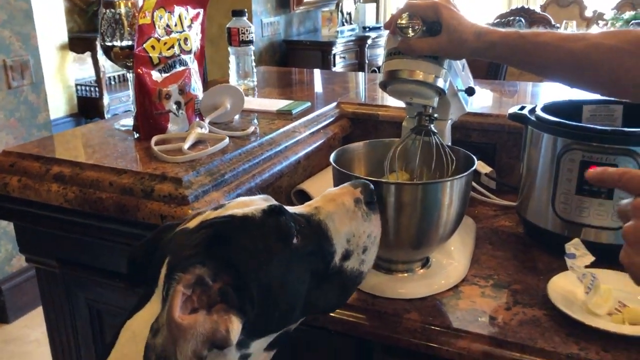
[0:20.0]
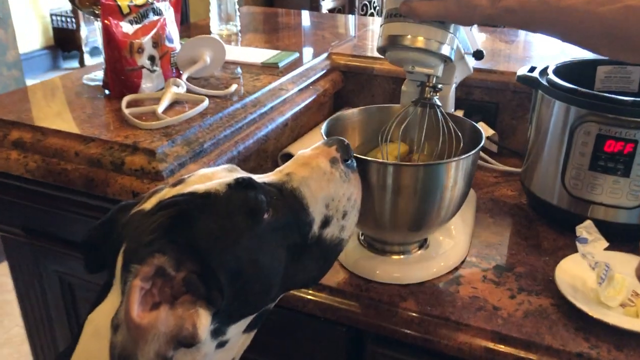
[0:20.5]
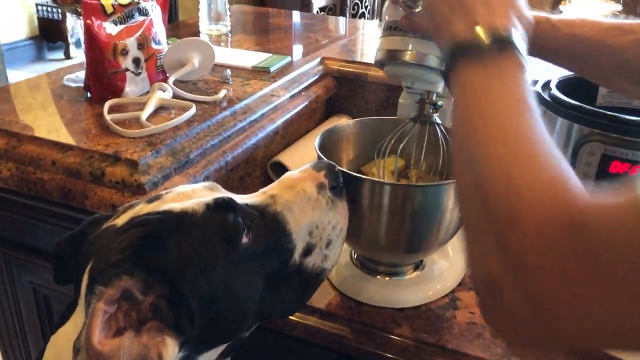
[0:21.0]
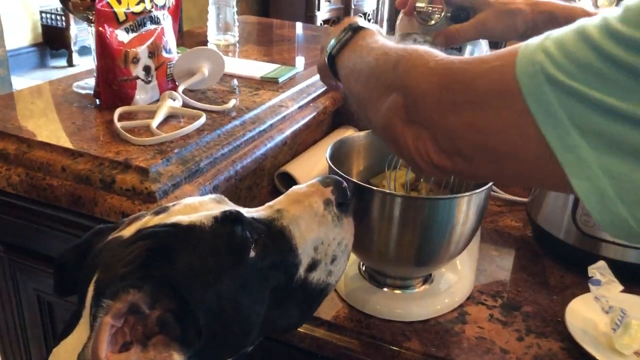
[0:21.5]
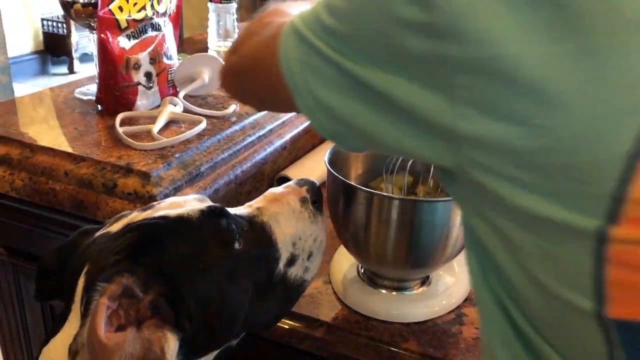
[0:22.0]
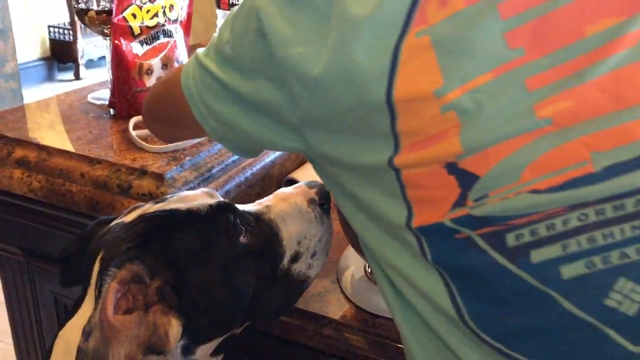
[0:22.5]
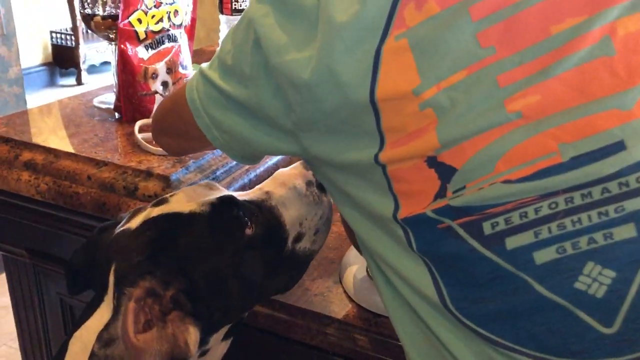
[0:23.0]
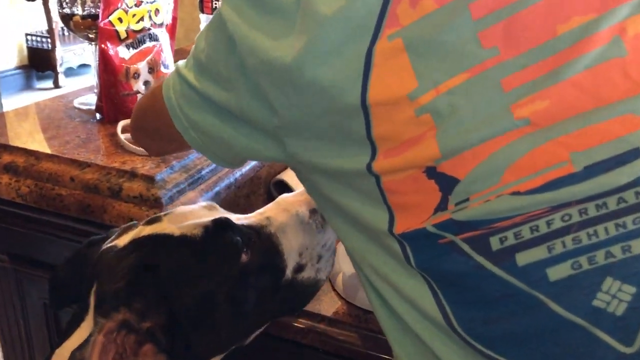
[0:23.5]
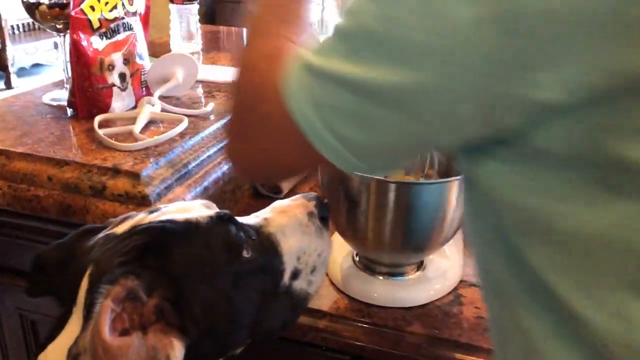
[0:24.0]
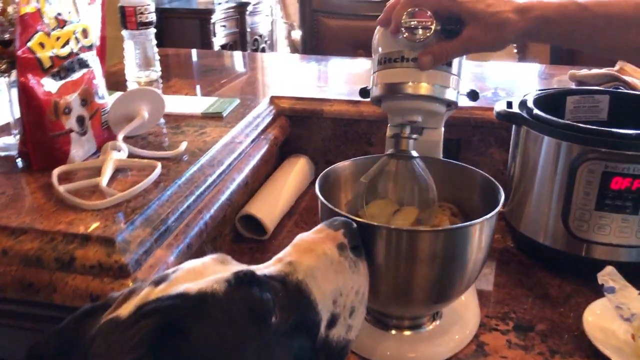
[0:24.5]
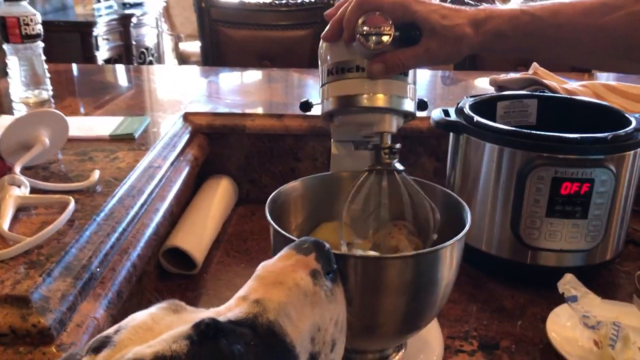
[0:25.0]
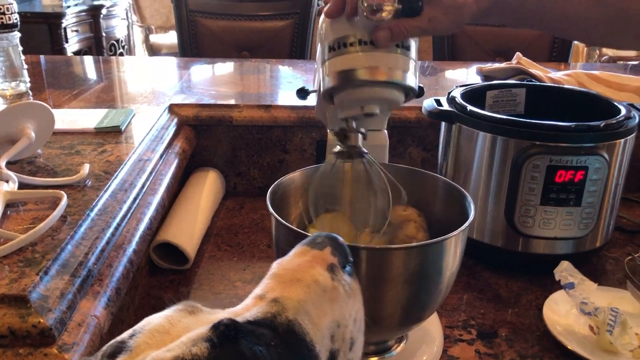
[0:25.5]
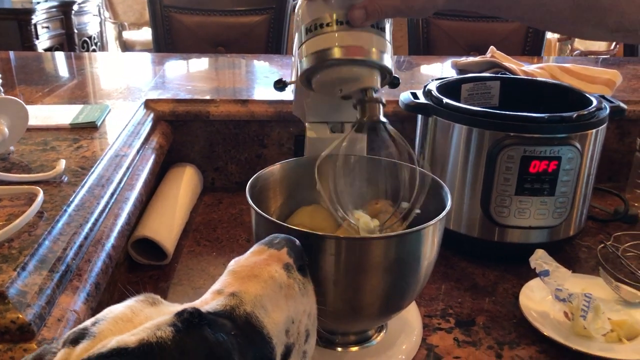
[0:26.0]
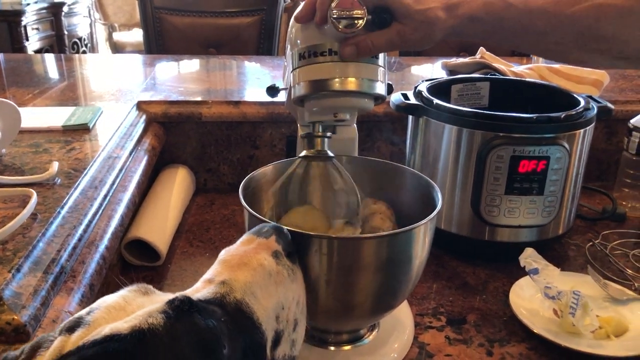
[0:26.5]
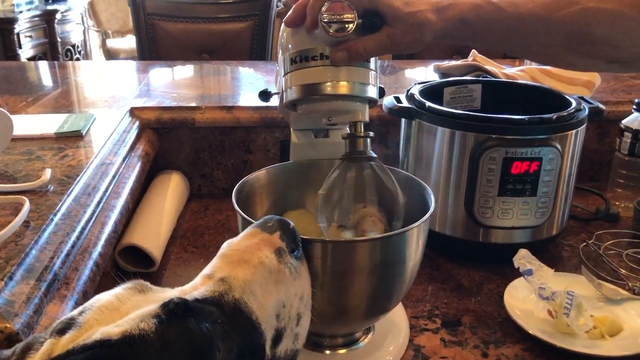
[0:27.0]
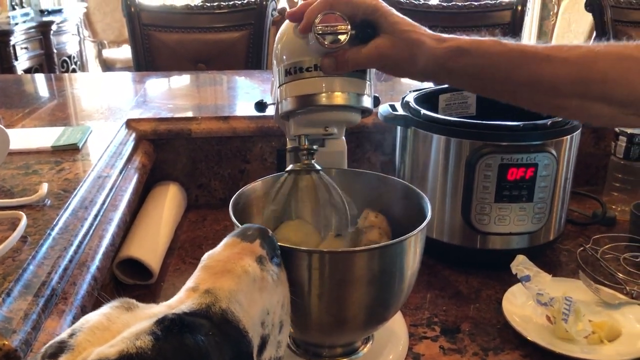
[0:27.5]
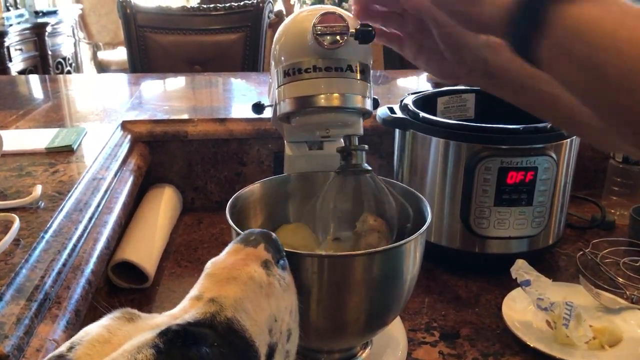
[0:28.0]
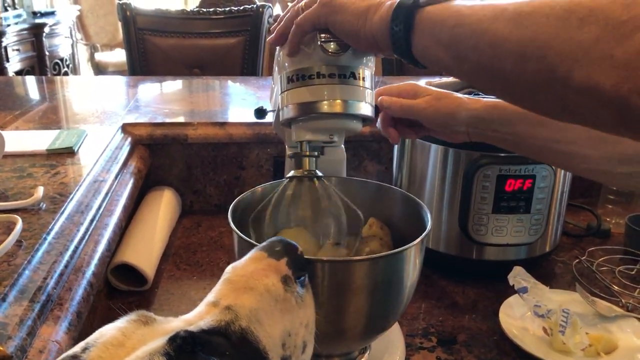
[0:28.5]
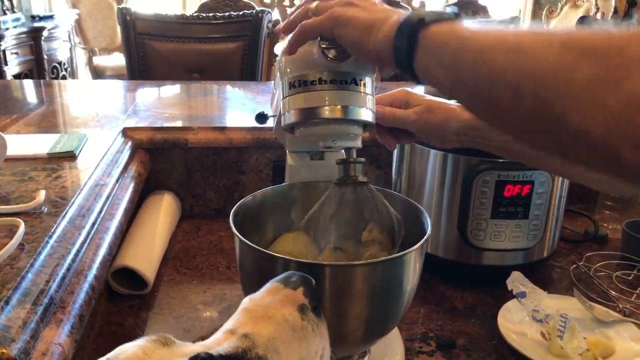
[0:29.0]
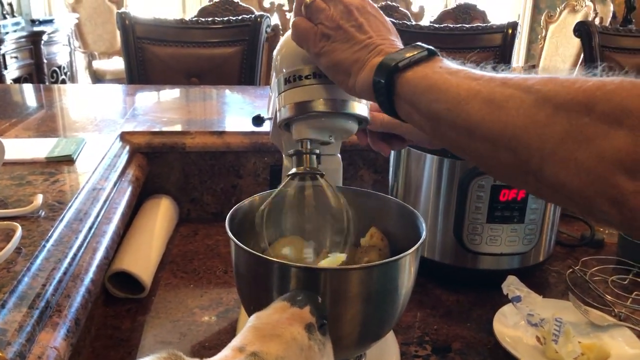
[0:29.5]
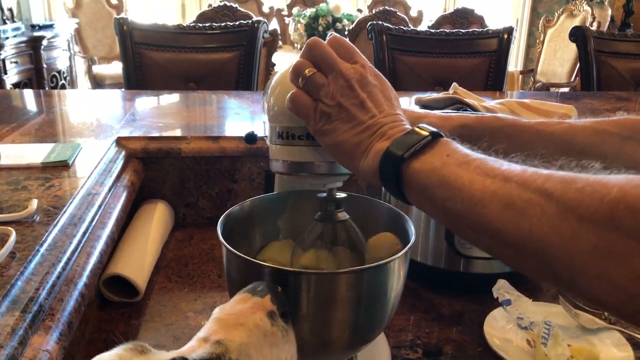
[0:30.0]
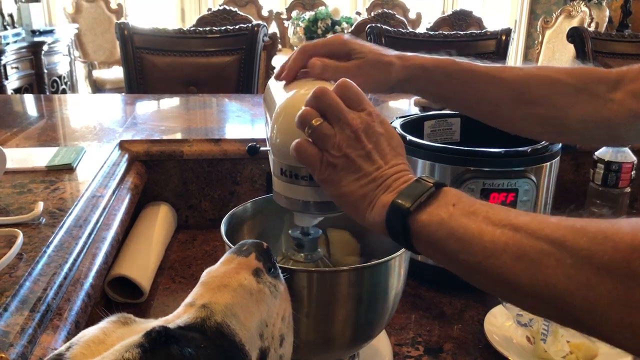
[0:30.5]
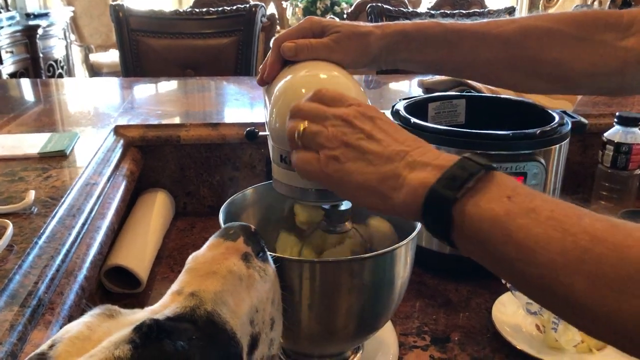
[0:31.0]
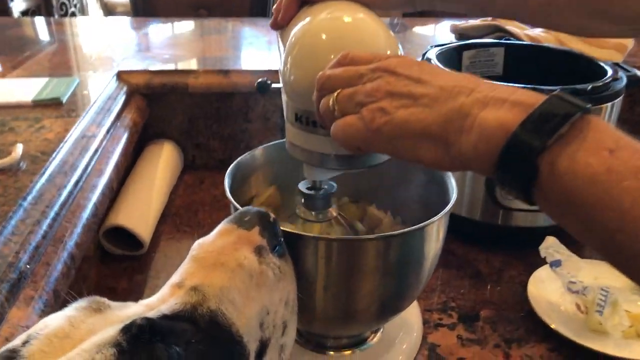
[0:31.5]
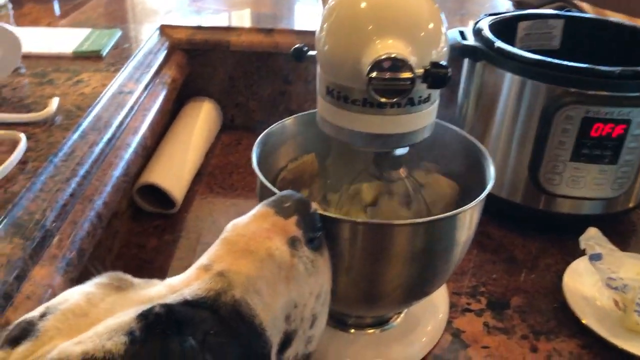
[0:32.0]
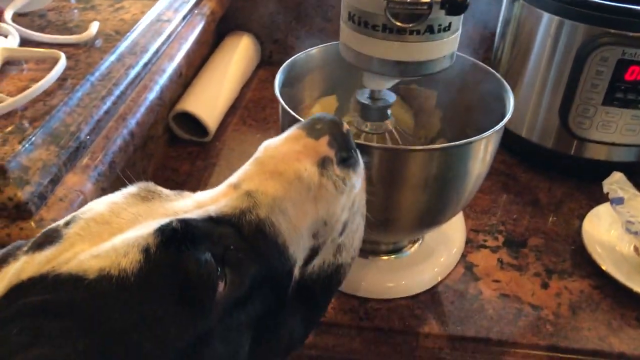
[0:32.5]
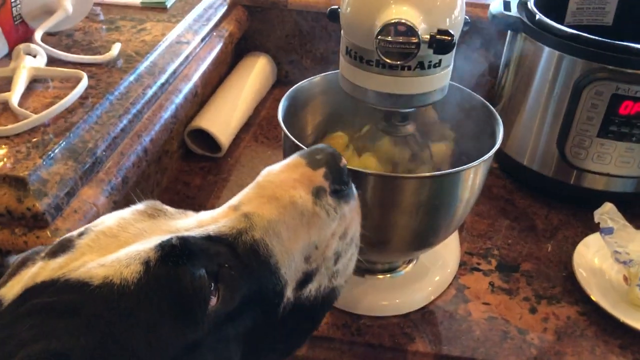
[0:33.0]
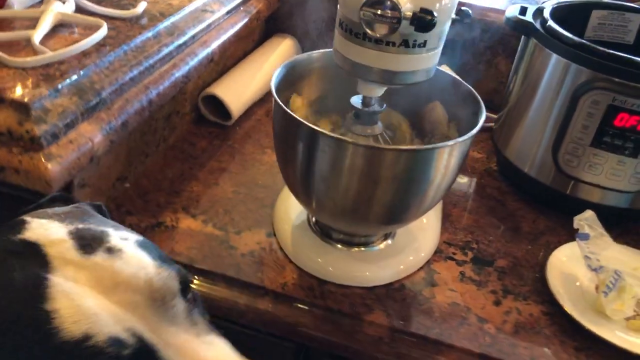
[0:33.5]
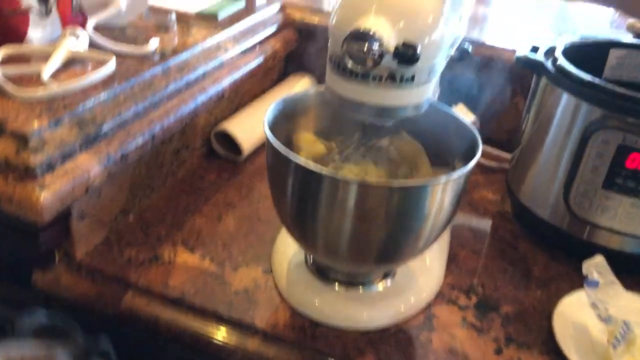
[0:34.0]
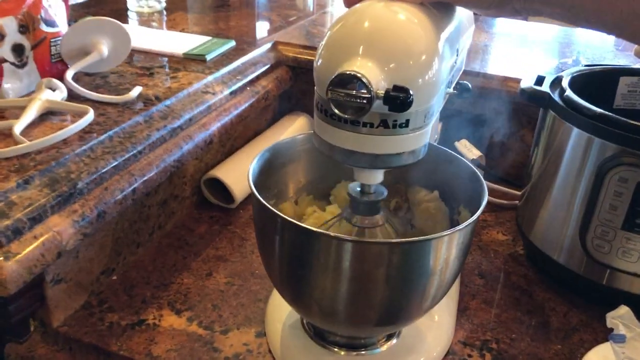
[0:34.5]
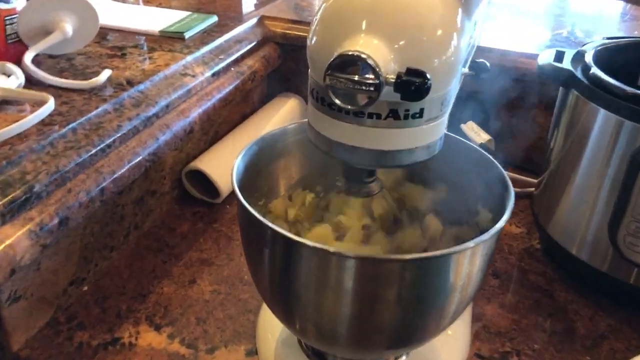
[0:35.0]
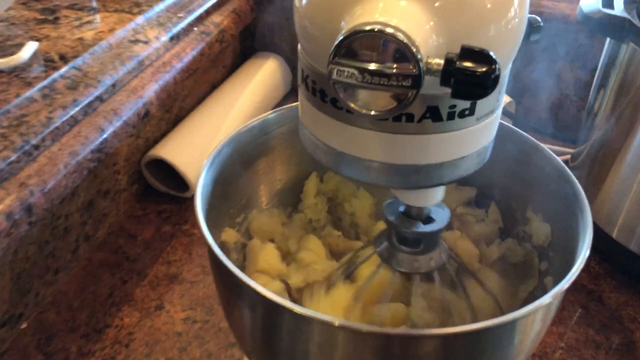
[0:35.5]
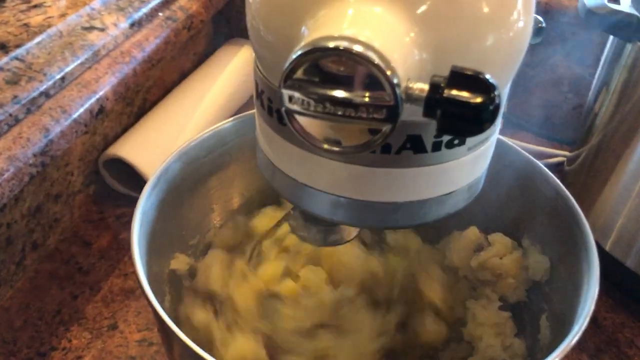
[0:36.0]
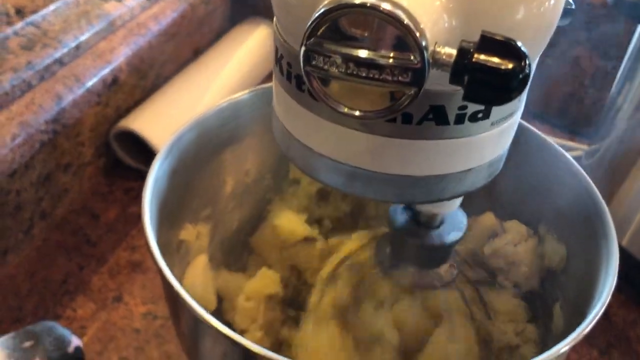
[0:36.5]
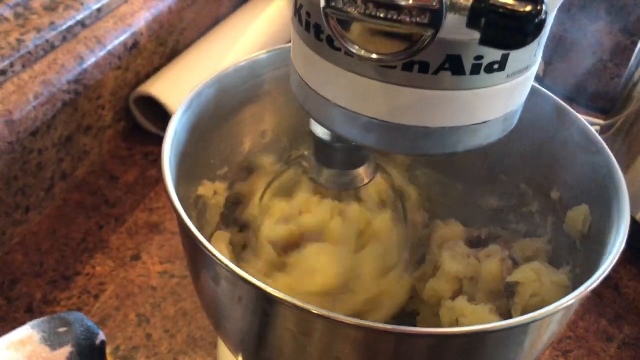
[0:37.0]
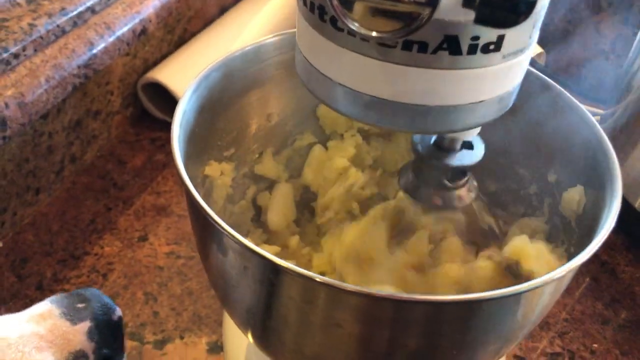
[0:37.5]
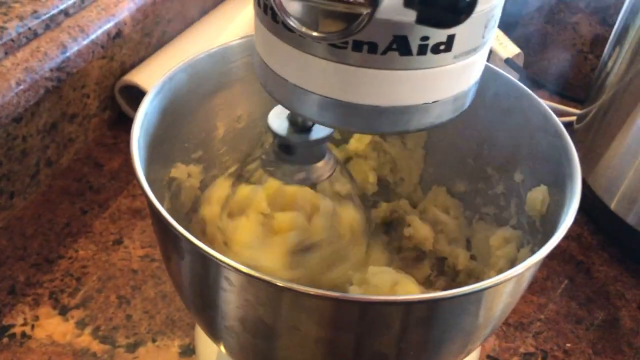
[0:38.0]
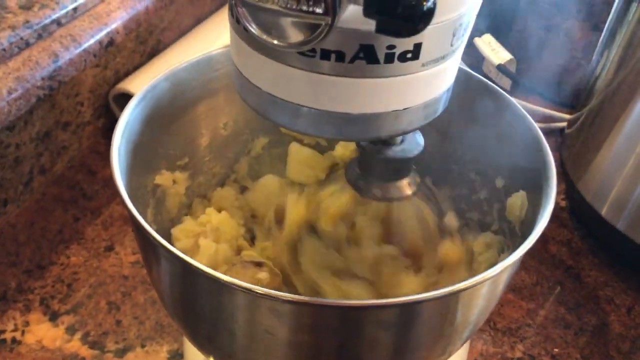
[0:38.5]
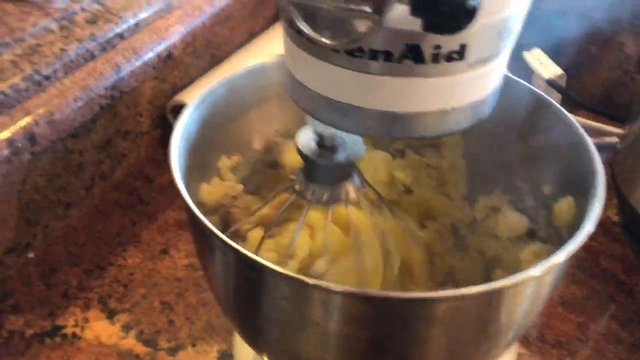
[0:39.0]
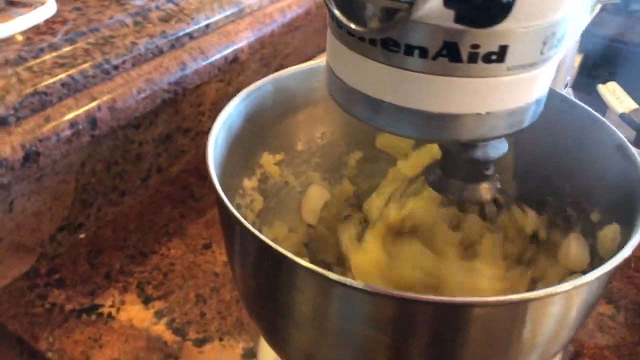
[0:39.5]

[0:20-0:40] In the same kitchen, the Caucasian person actively operates the electrical whisk, whisking the unpeeled potatoes. The potatoes seem to be steaming hot, as steam rises from the stainless steel bowl they are in. To the left of the electrical whisk there appears to be a plastic whisk. Behind the dog food there looks like a wine glass, and the dog food appears to be labeled "Paw Pero". The dog looks very excited by and interested in what is going on inside the whisk. The person wears a black watch that looks like an Apple Watch or a Fitbit.